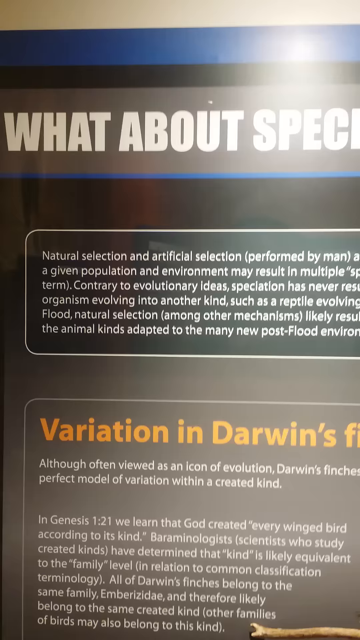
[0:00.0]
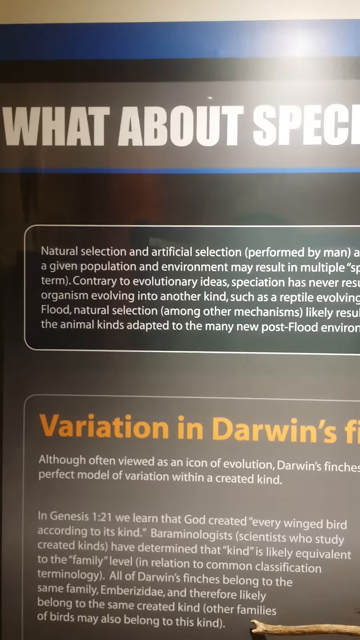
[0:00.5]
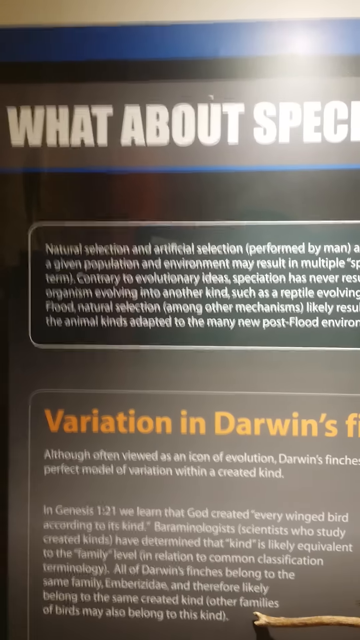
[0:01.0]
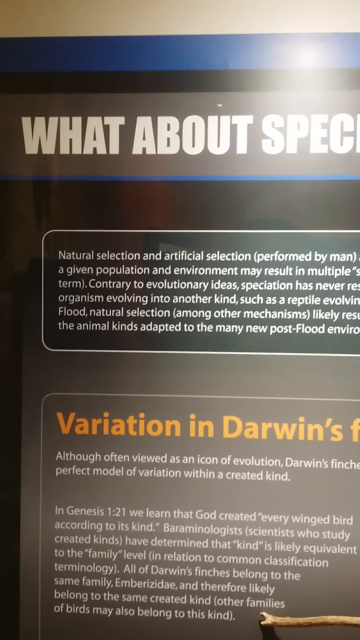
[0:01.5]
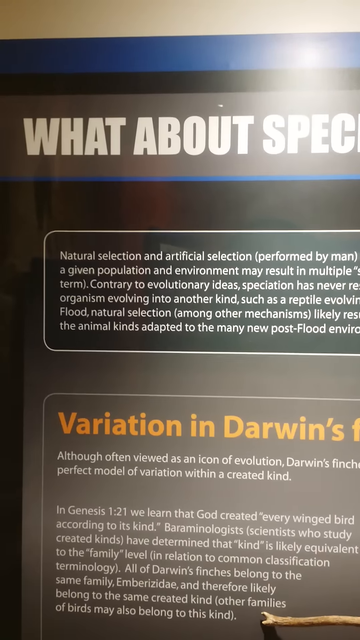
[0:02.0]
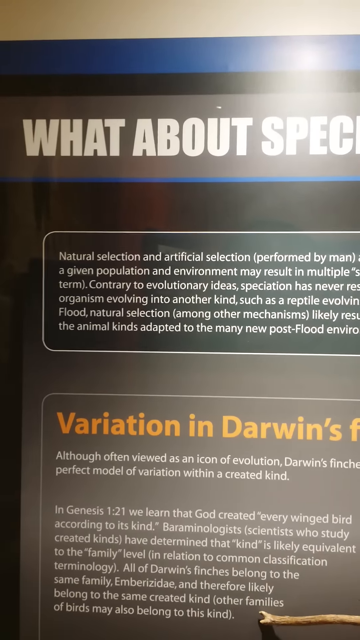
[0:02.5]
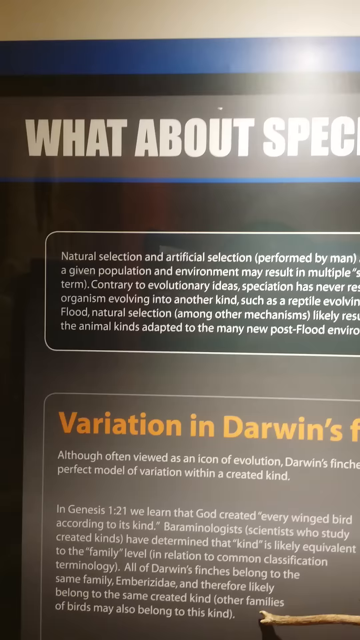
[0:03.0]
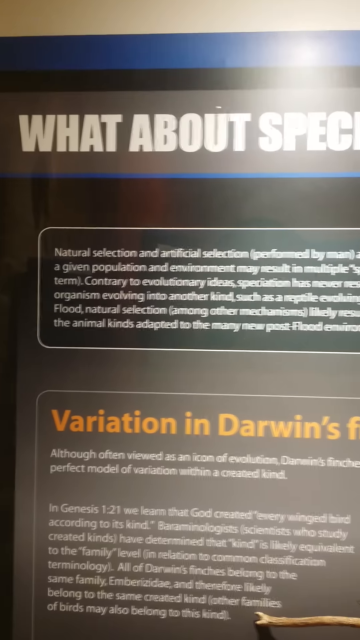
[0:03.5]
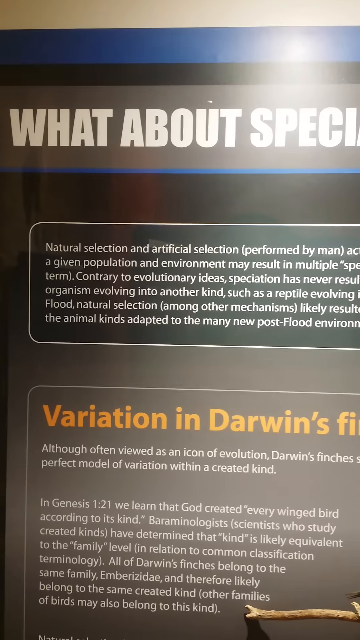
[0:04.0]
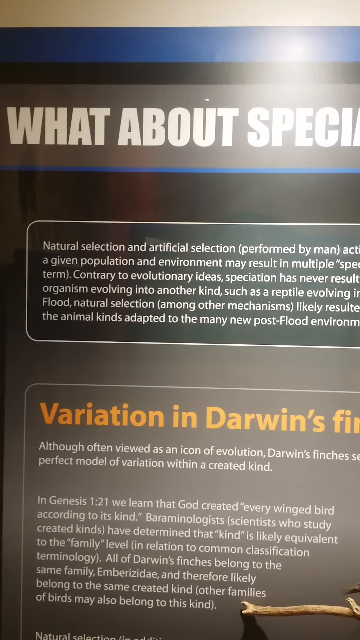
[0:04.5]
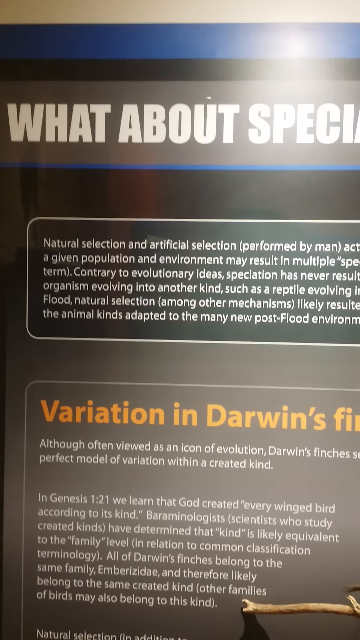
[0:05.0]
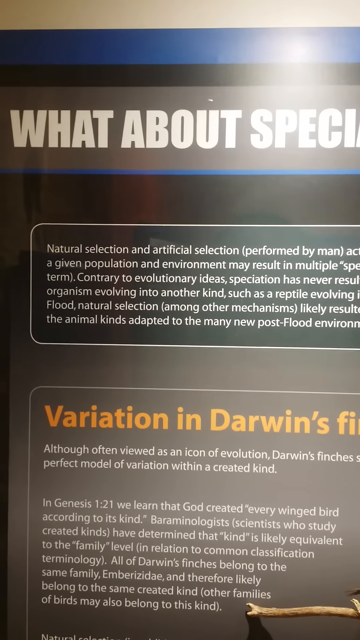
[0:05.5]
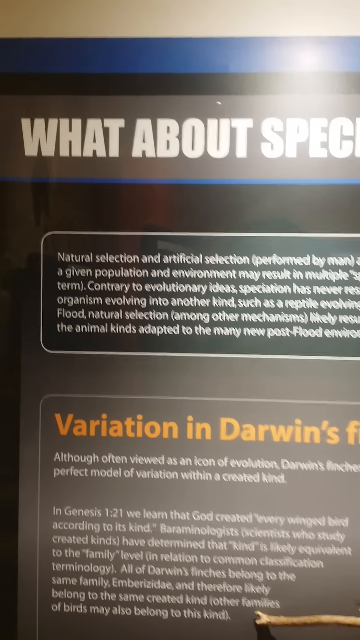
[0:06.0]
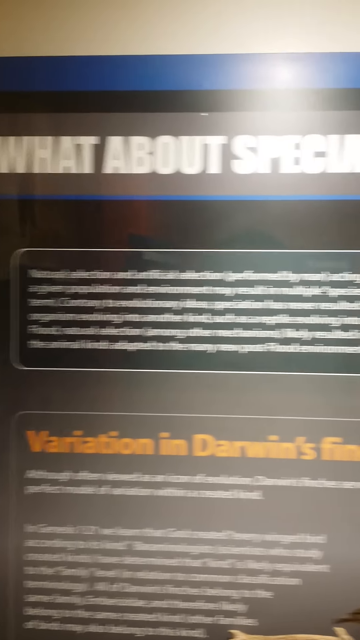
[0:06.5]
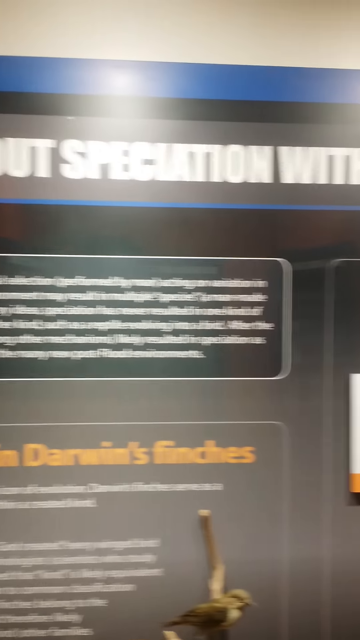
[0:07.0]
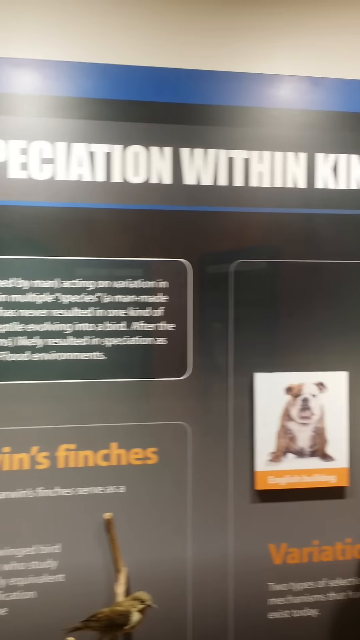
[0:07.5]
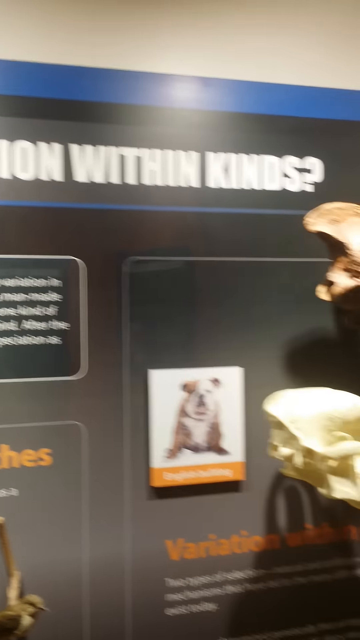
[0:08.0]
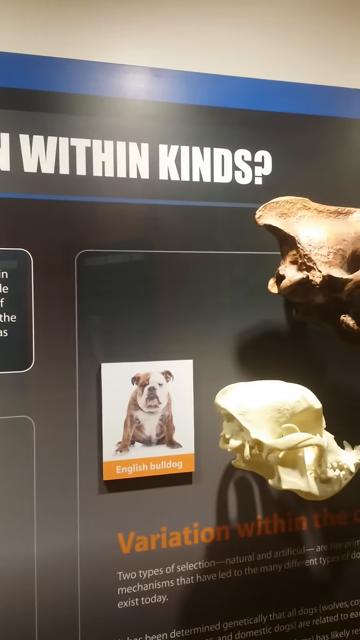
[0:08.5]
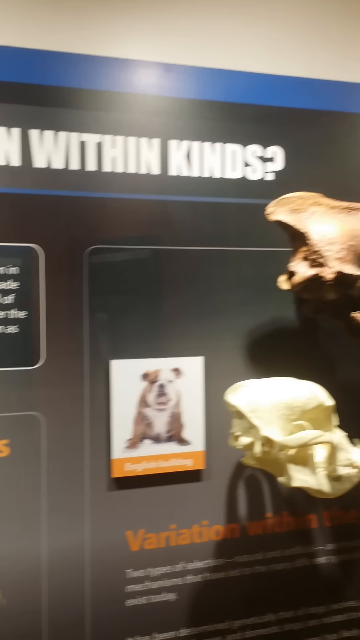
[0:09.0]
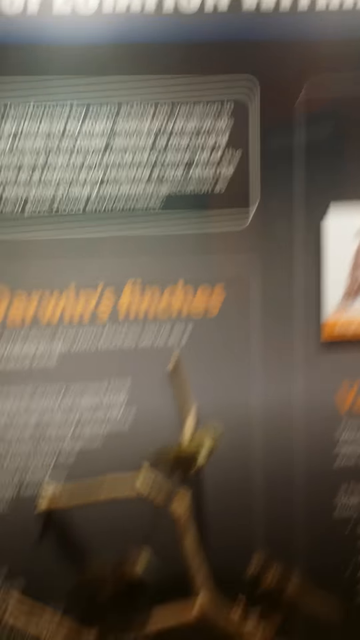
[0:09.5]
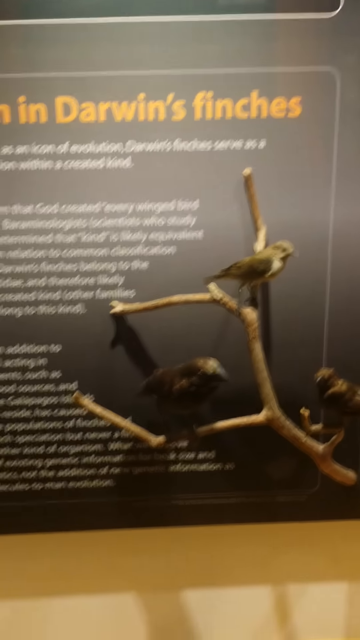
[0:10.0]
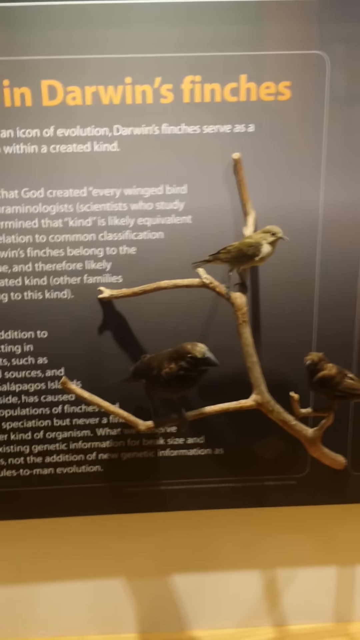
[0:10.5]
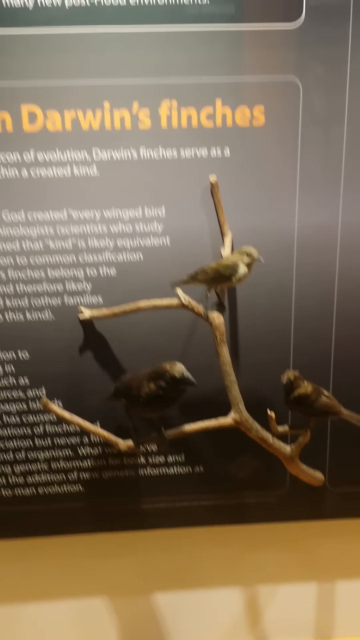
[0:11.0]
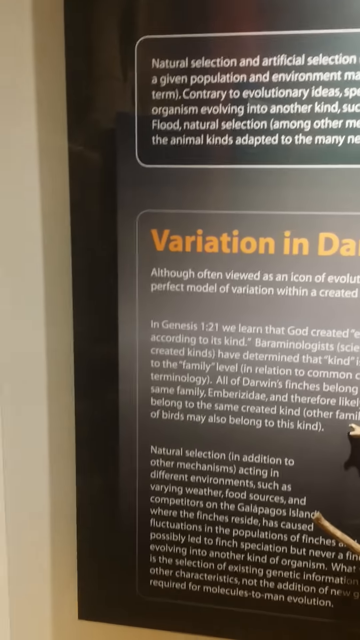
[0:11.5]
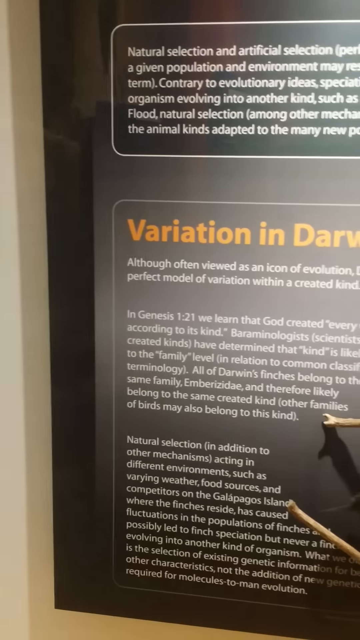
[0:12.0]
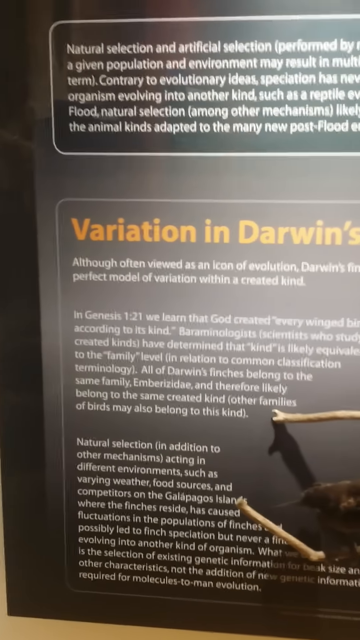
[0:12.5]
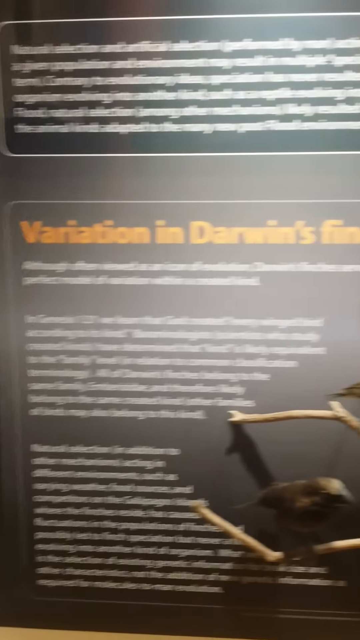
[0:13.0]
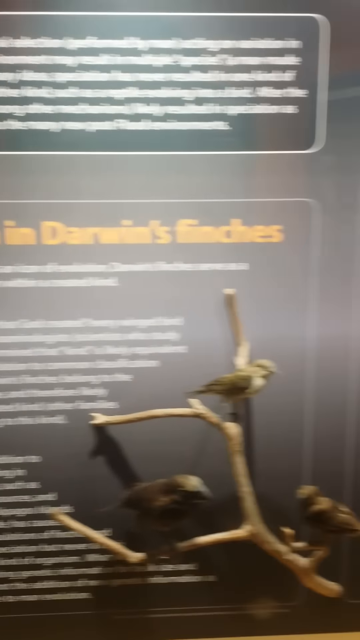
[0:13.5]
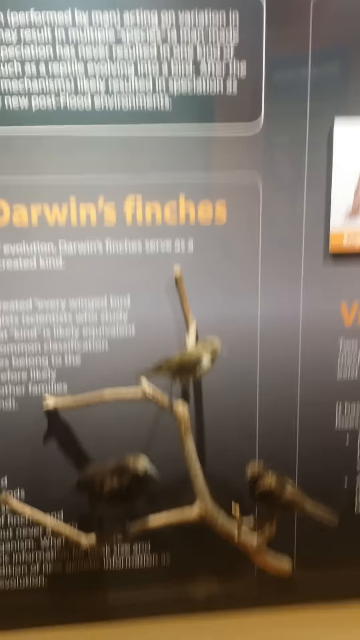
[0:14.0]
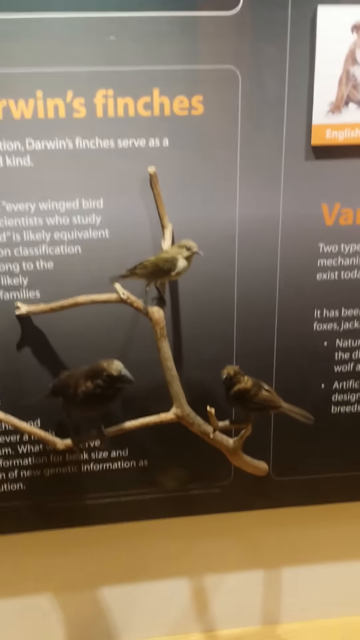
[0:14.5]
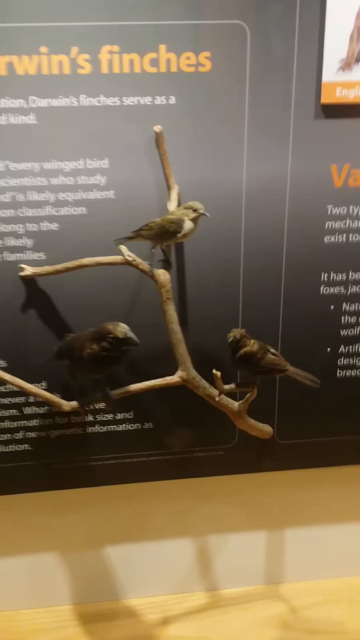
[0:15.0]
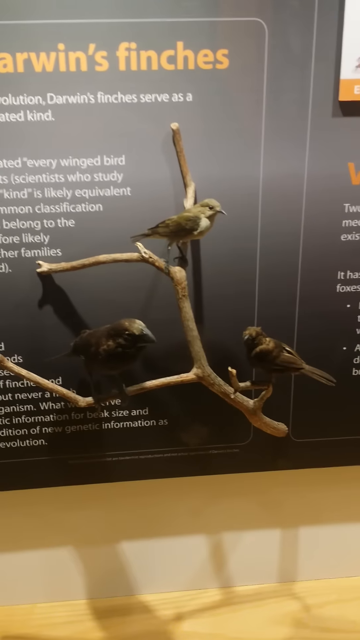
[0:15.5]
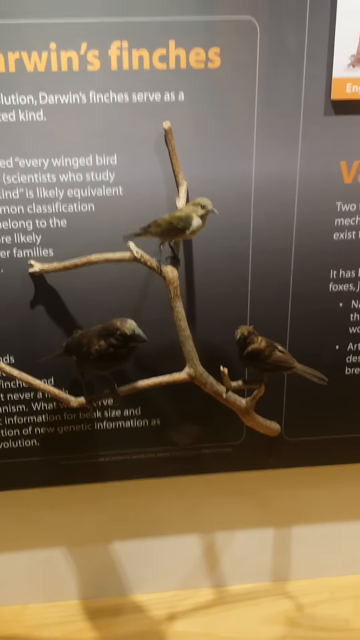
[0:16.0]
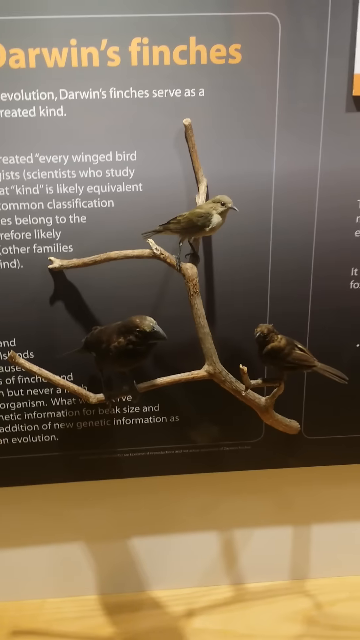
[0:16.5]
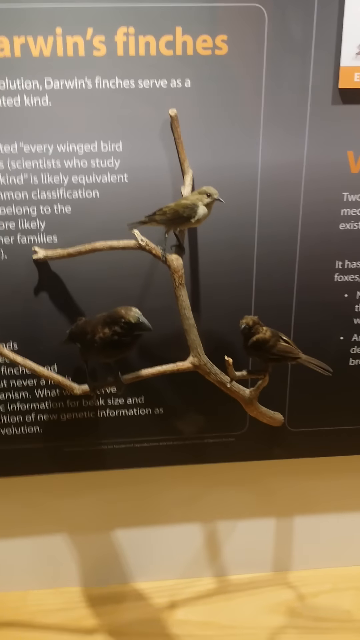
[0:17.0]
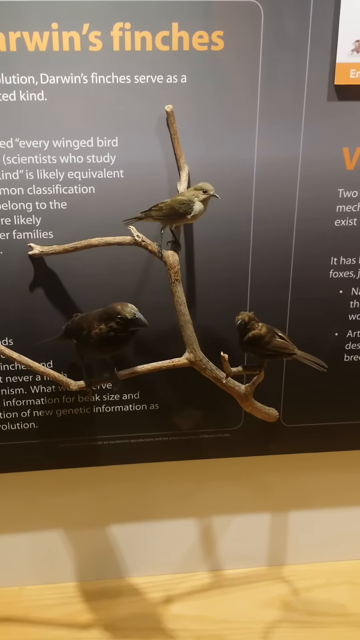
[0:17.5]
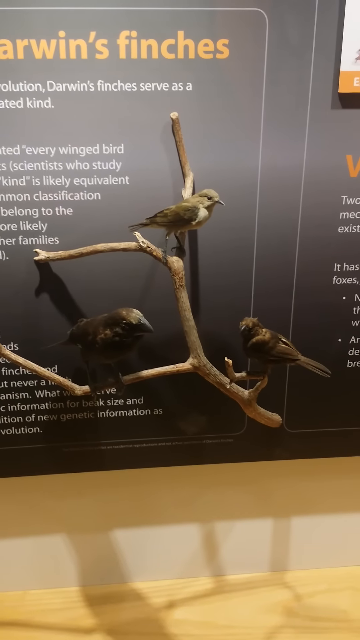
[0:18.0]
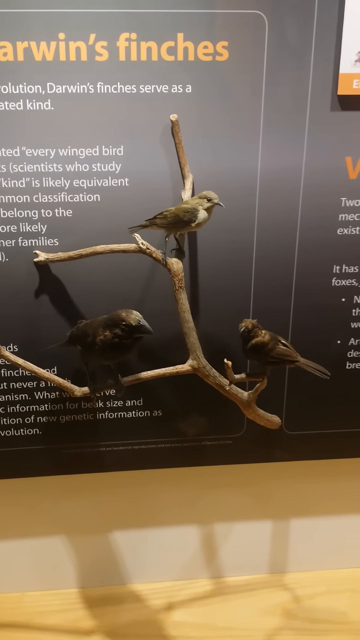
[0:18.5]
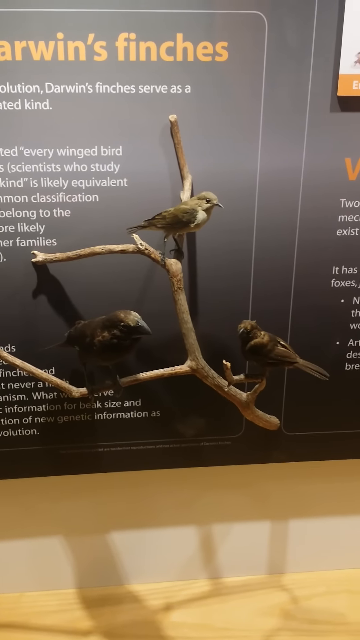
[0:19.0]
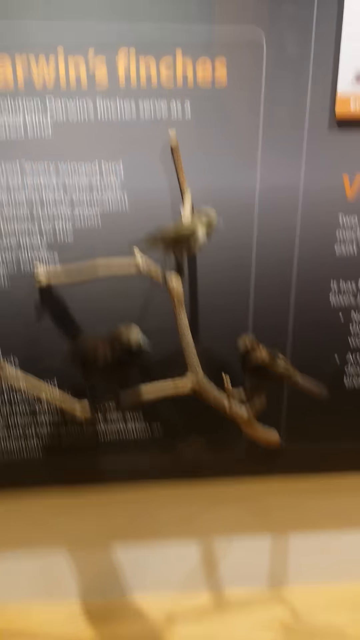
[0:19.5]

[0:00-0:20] A phone recording shows someone visiting a museum and looking at a wall exhibition focused on Darwin and speciation. Part of the title text reads "what about speciation". There are various sections of text, for example "natural selection" and "artificial selection performed by man", "a given population environment may result in multiple species", and text beginning "contrary to evolutionary ideas speciation has never resulted in". As the person expands the camera view, different species of dog become visible. There are various bone fragments and exhibits on the wall, and a branch or a few branches with three birds on them, Darwin's finches. The setting appears to be a museum of some kind, with various bits of text in the background.